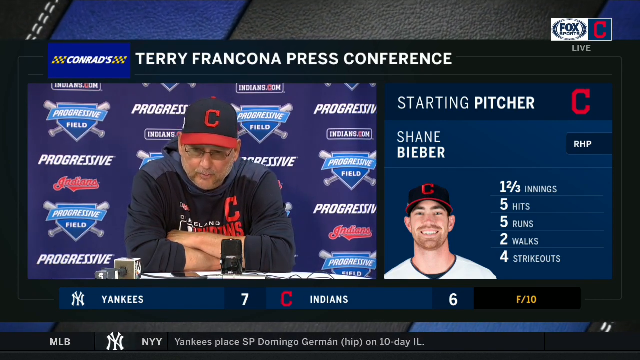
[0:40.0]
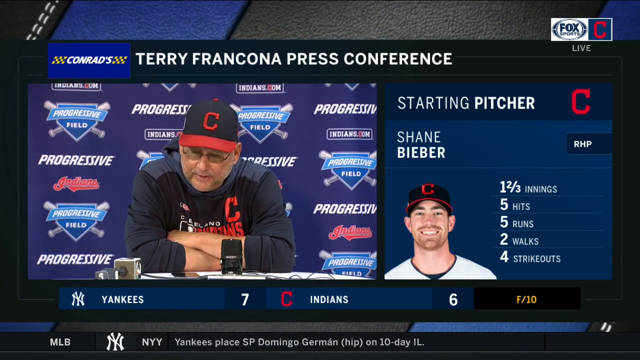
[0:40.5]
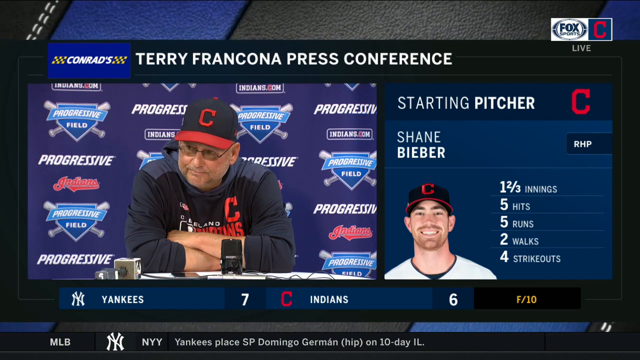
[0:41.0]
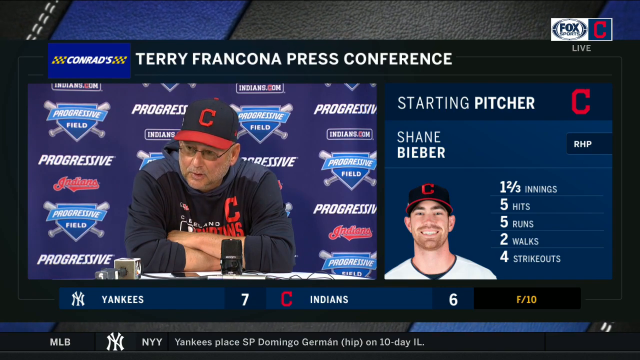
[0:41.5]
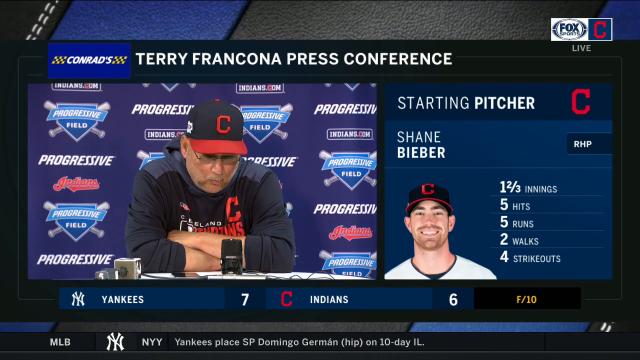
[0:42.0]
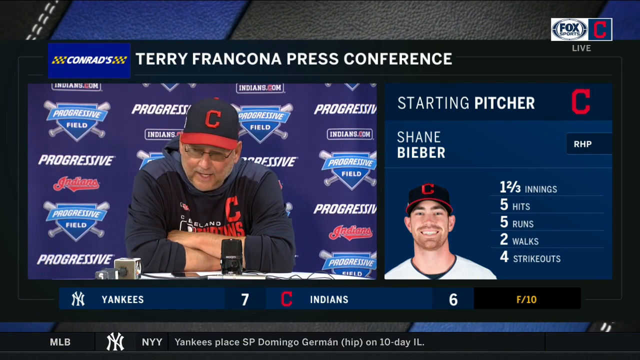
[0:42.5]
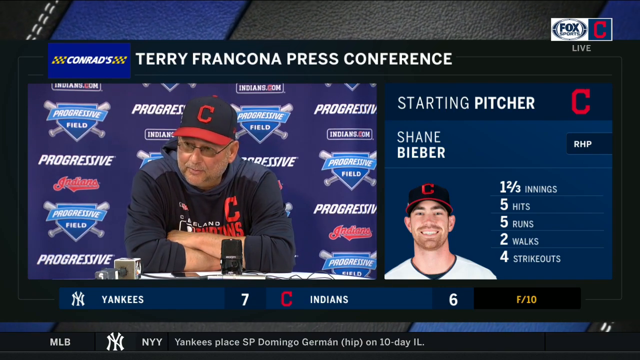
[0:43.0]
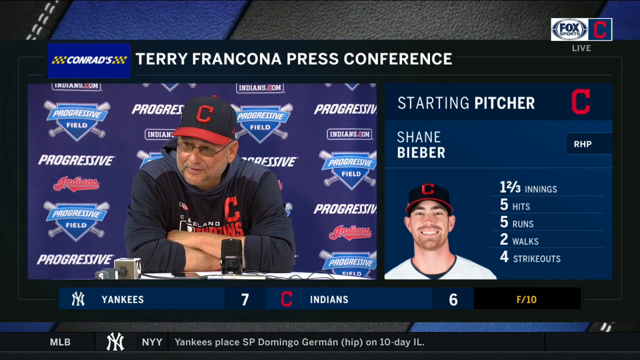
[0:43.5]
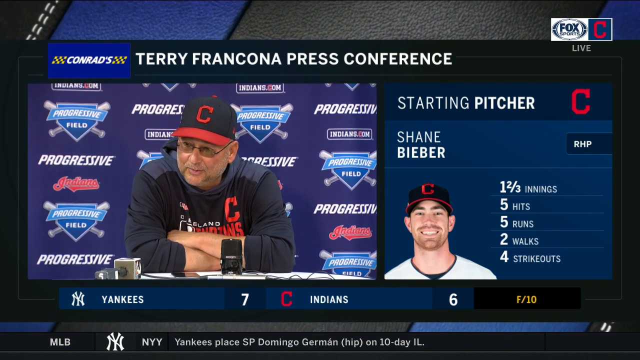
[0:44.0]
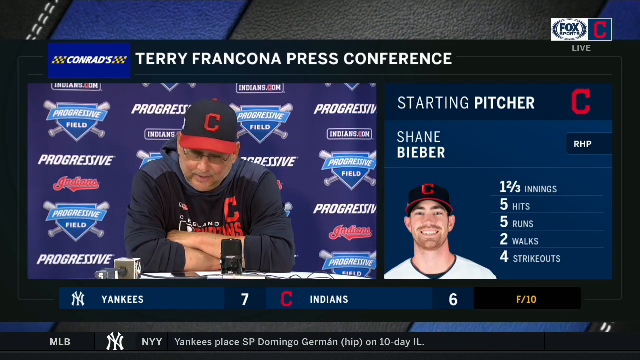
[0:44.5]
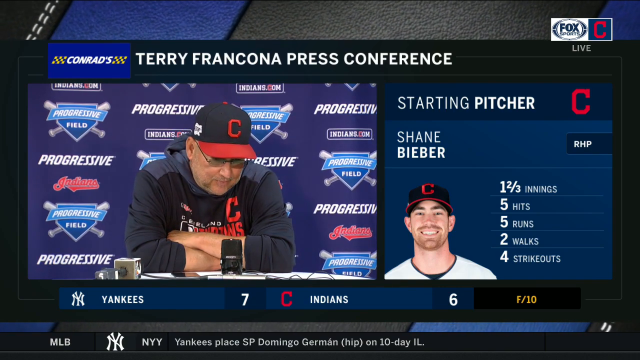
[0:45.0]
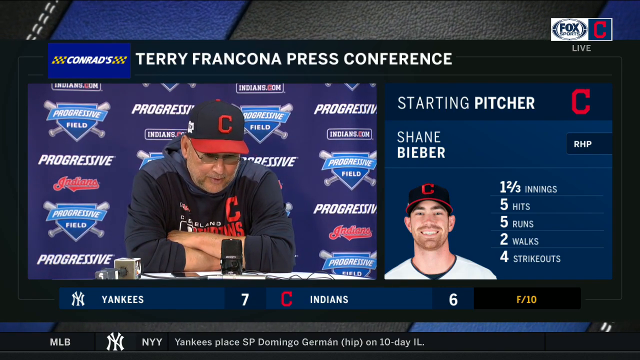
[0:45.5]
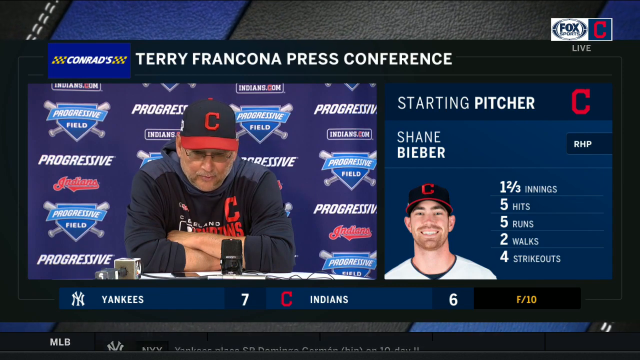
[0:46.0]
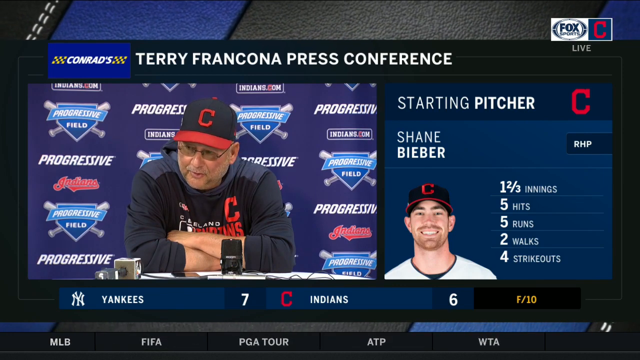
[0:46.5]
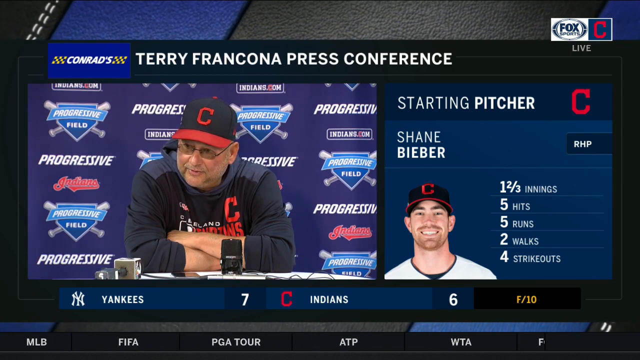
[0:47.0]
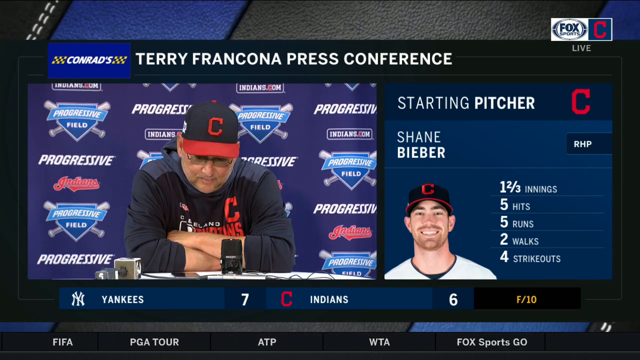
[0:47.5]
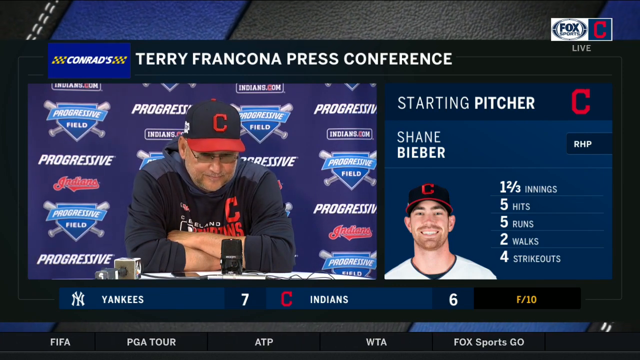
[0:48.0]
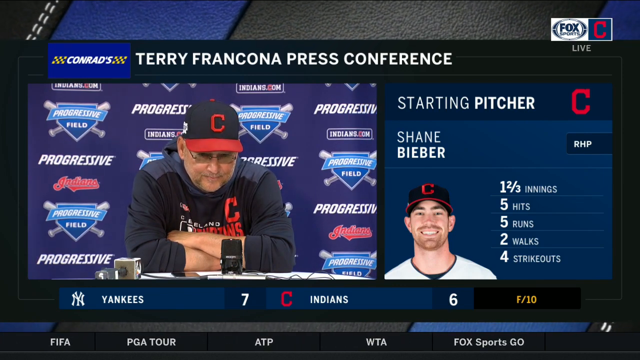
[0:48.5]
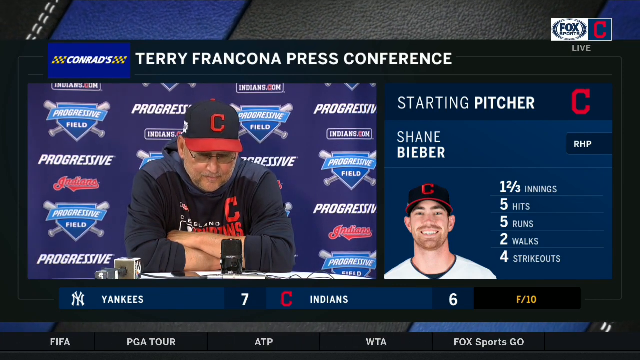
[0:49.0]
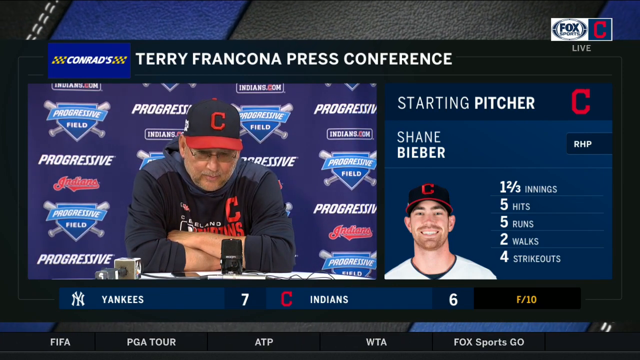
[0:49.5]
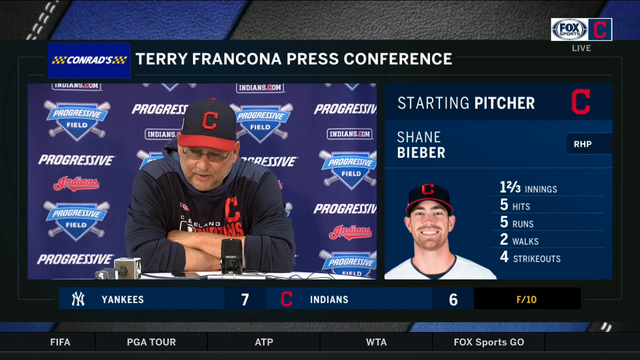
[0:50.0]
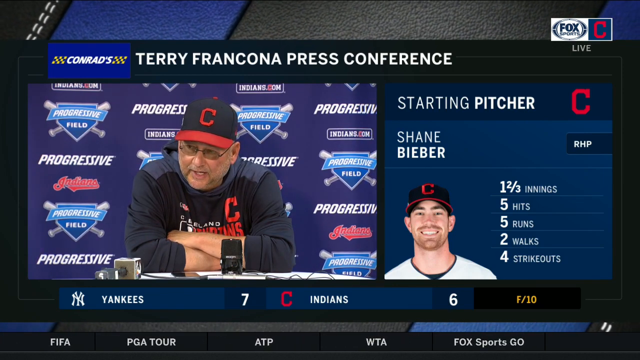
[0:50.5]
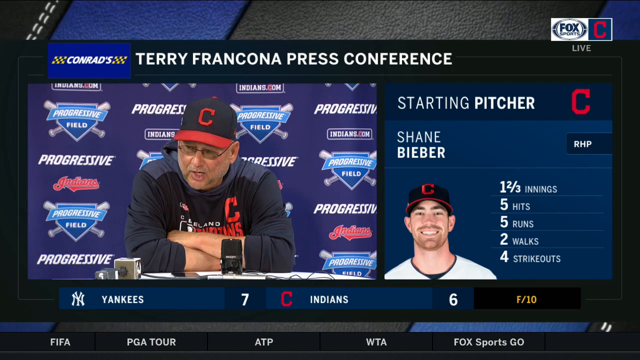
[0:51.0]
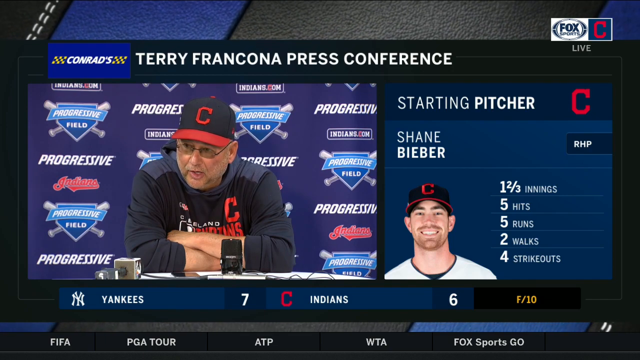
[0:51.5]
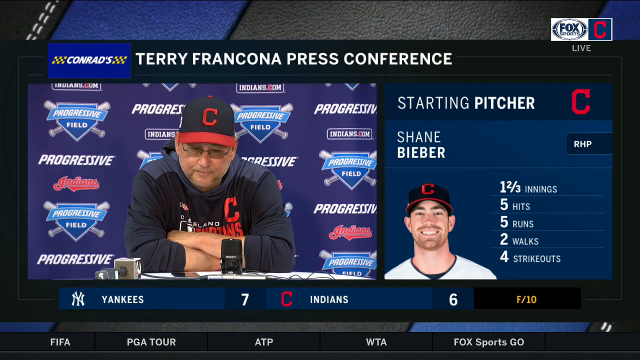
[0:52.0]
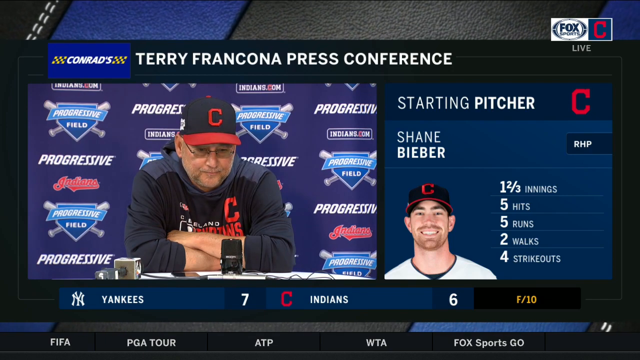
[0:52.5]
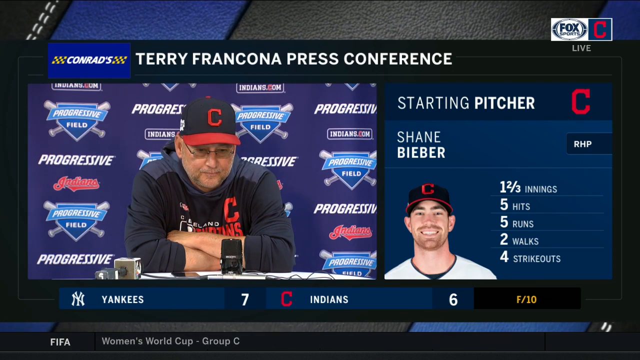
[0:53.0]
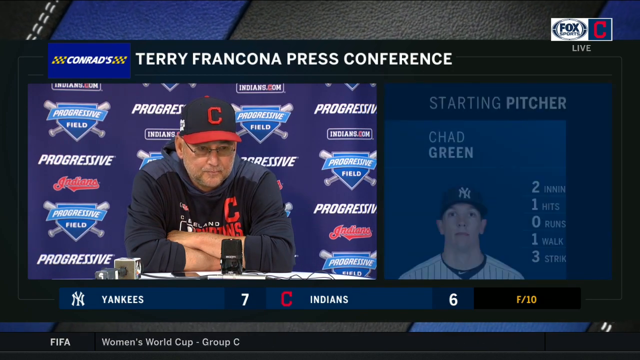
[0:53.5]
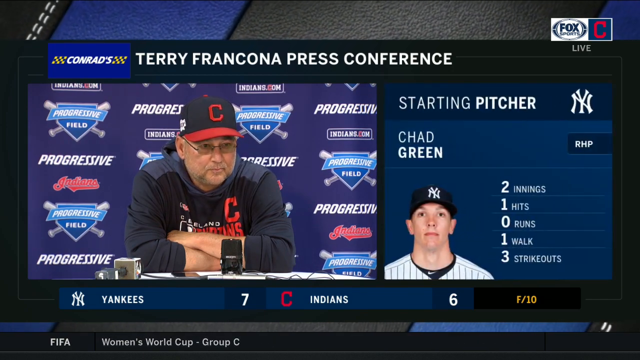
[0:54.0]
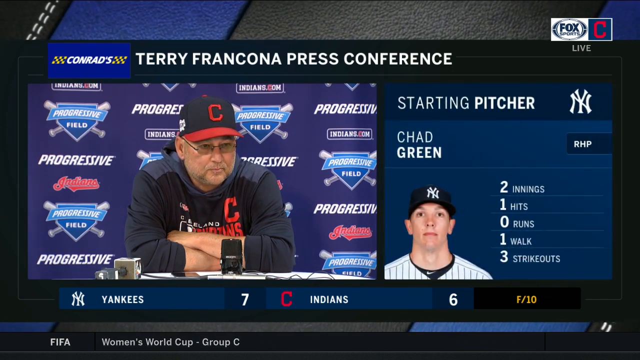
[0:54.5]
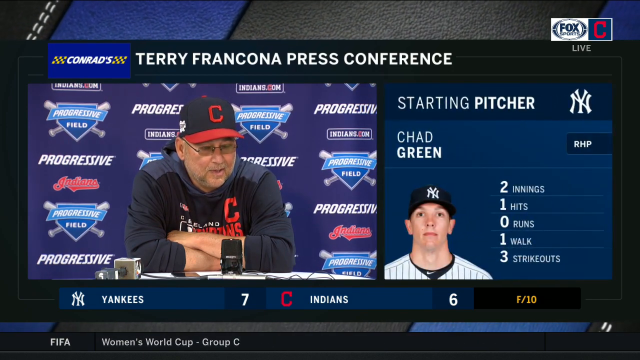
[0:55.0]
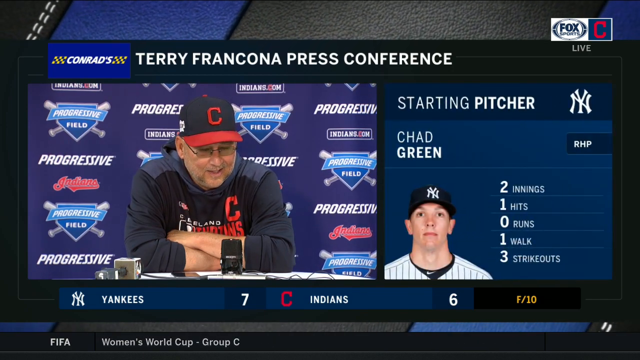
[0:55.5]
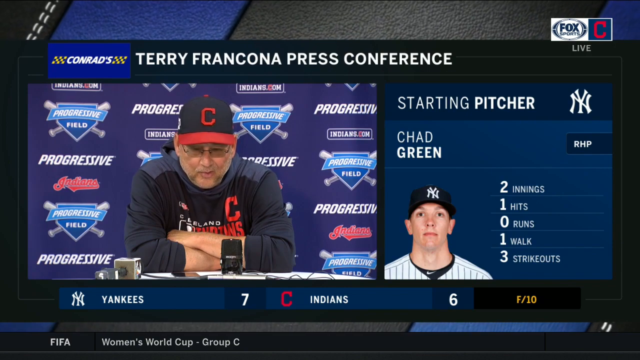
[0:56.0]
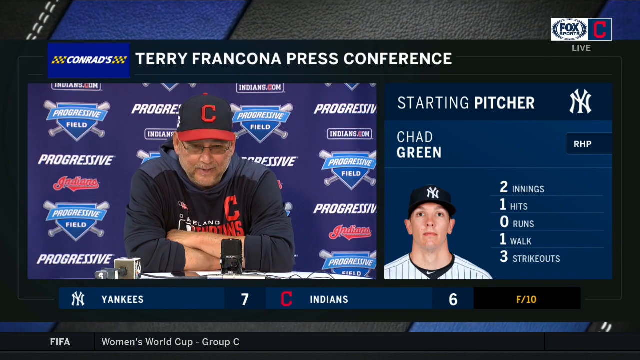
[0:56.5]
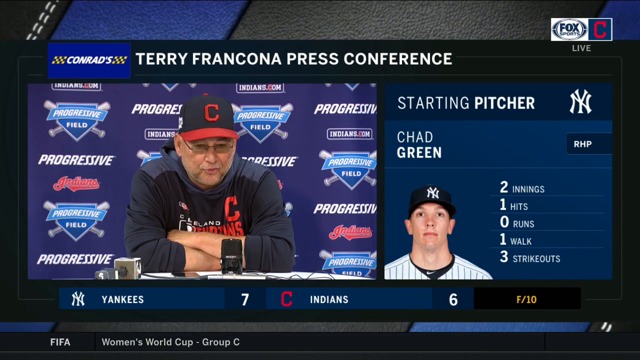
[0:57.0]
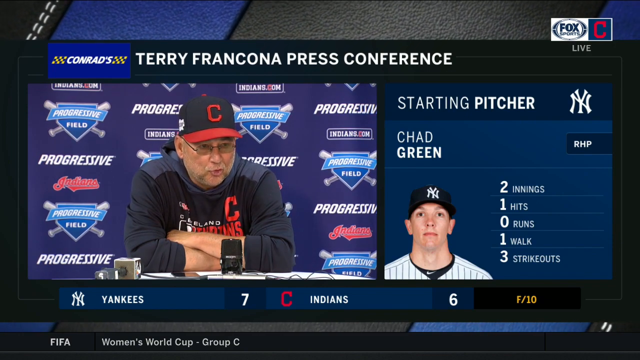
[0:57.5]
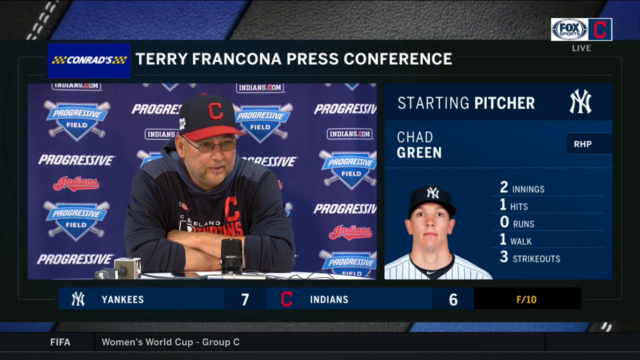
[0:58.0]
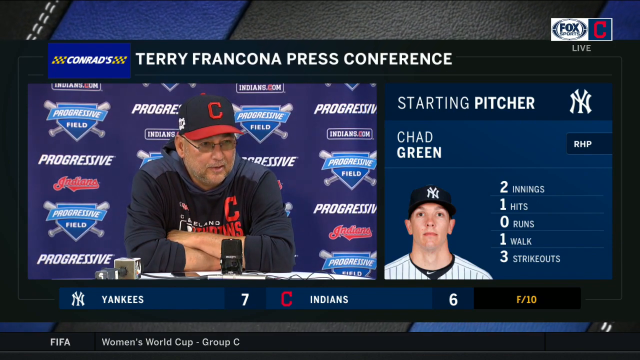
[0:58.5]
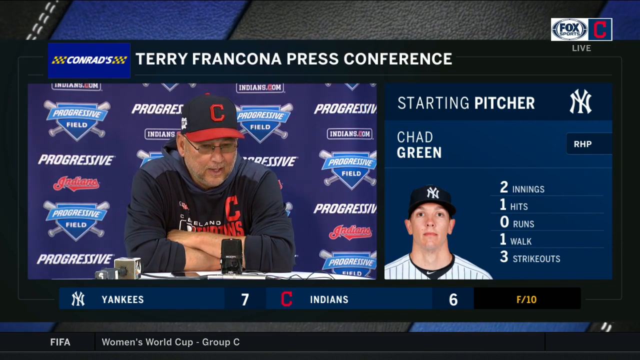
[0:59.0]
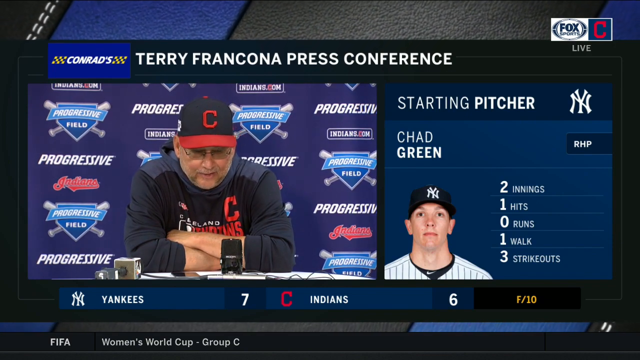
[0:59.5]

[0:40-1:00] The Cleveland Indians coach is on the left section of the screen. The right section shows Shane Bieber, presented as a star pitcher for the Cleveland Indians, and then switches to another starting pitcher, Chad Green. In the top right of the screen, text reads "Fox Sports, Cleveland Indians", and text across the top names the coach's press conference. In the top left, the word "Conrad's" appears as part of a logo. There is a purple background behind the coach, who wears glasses and a Cleveland Indians baseball hat and talks directly to the audience. The score shows the Yankees with seven versus the Cleveland Indians with six.